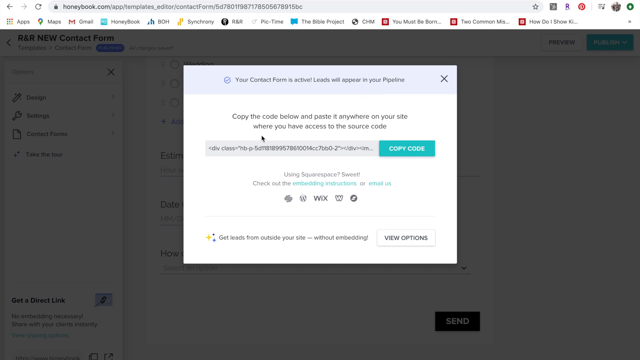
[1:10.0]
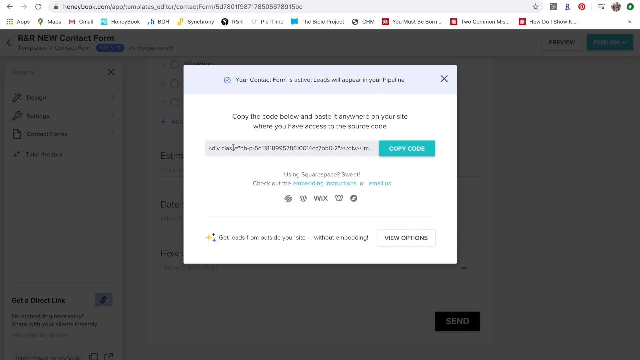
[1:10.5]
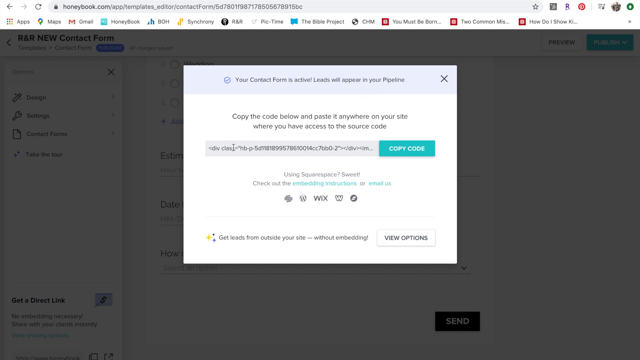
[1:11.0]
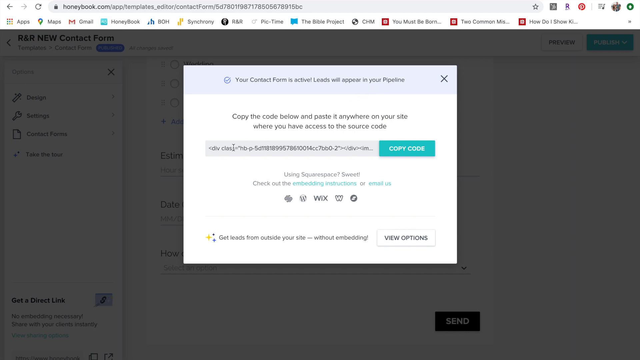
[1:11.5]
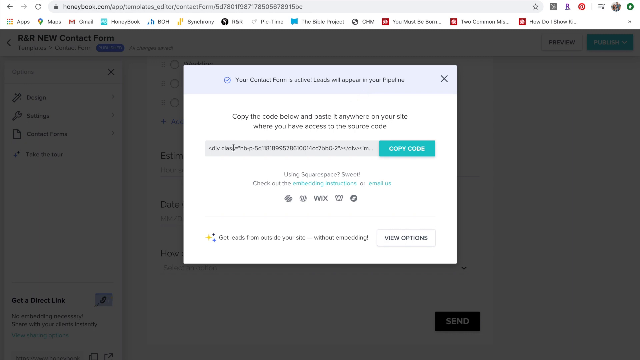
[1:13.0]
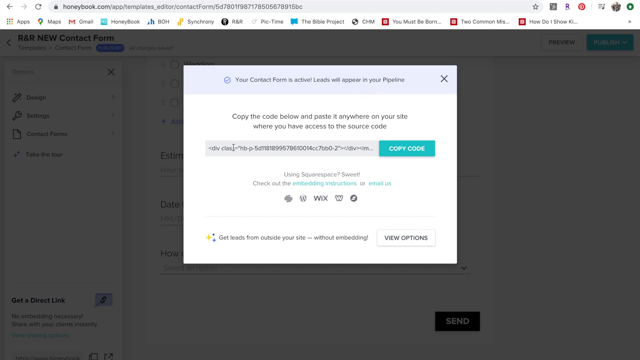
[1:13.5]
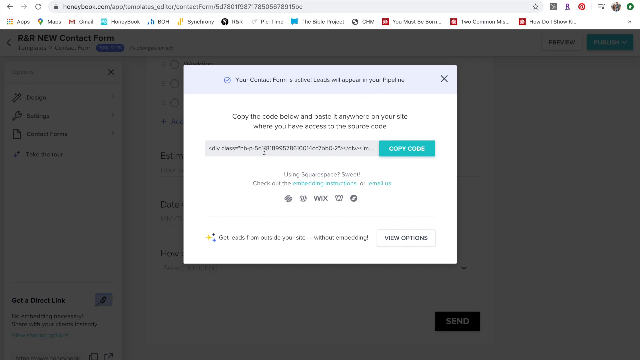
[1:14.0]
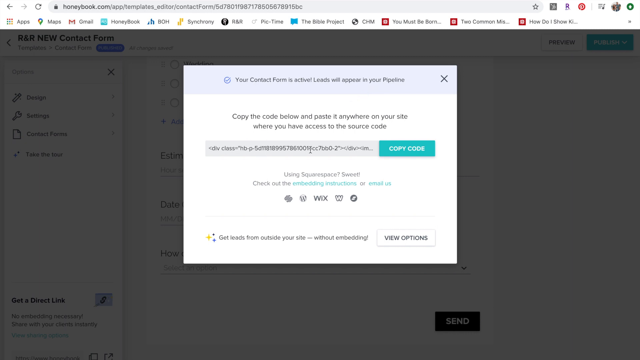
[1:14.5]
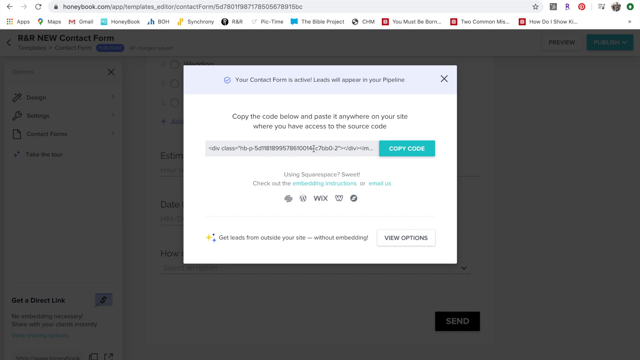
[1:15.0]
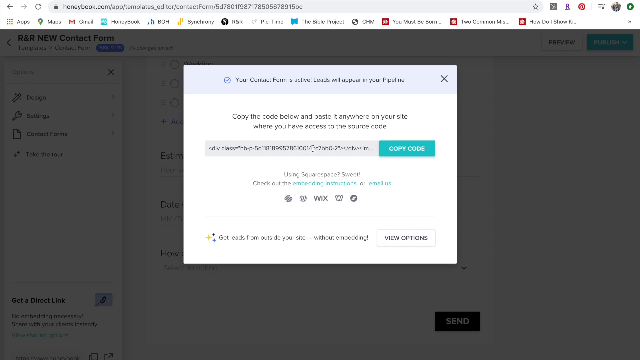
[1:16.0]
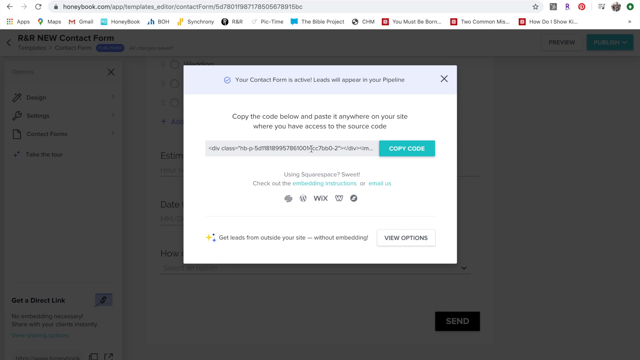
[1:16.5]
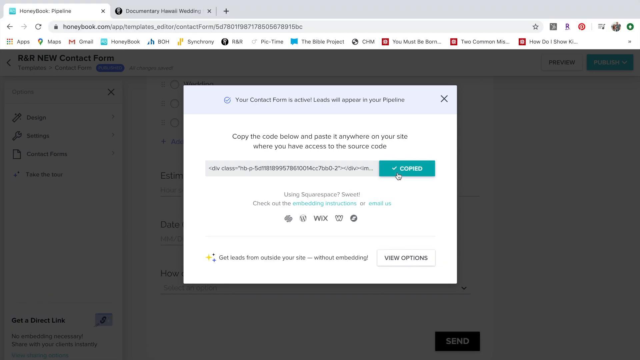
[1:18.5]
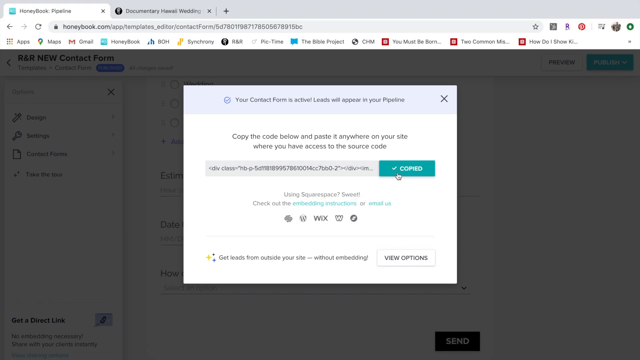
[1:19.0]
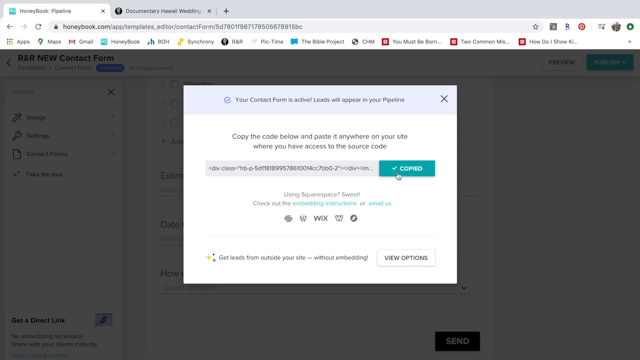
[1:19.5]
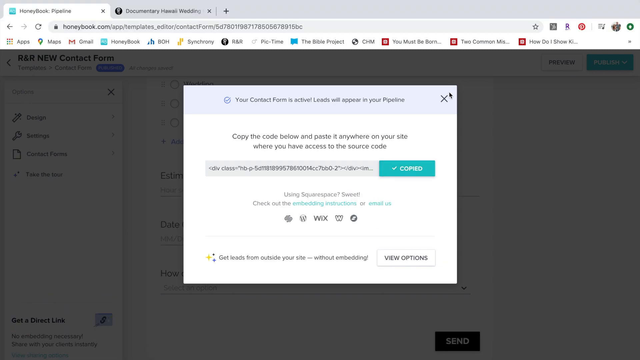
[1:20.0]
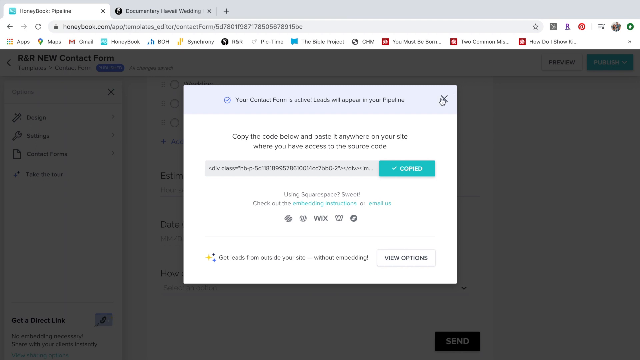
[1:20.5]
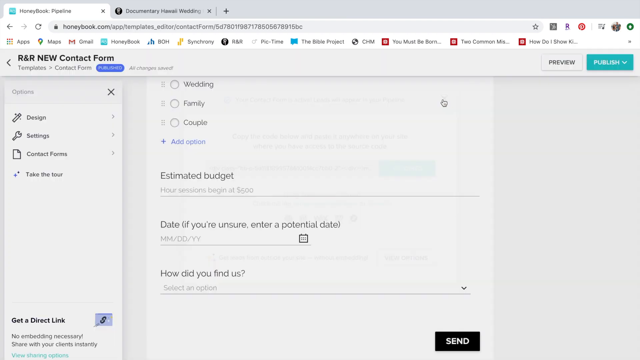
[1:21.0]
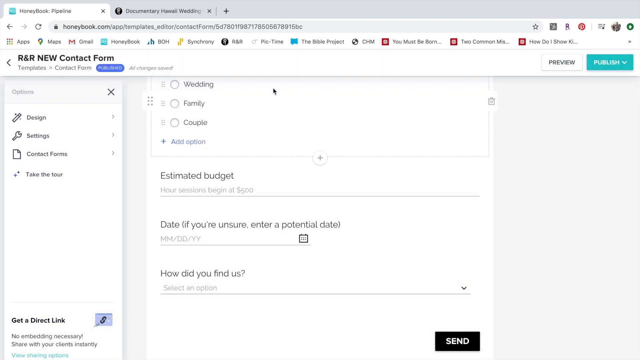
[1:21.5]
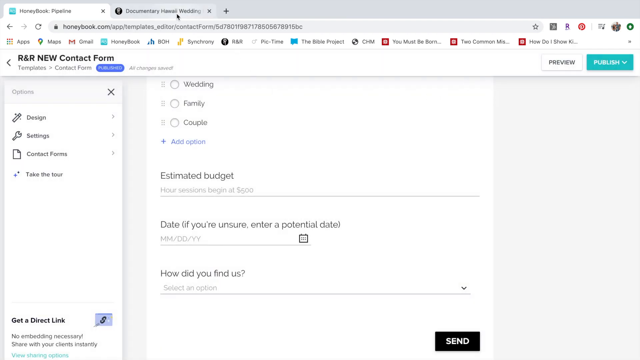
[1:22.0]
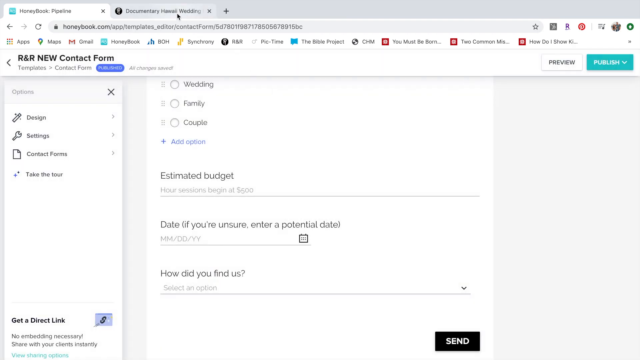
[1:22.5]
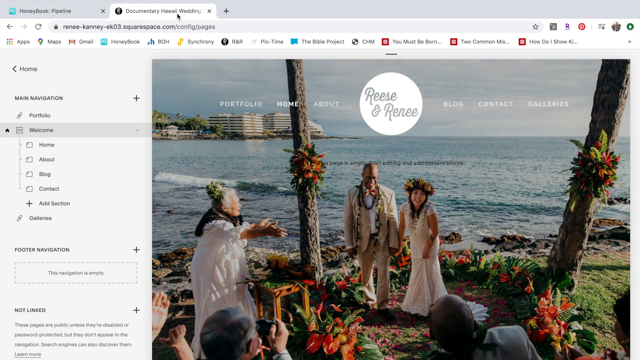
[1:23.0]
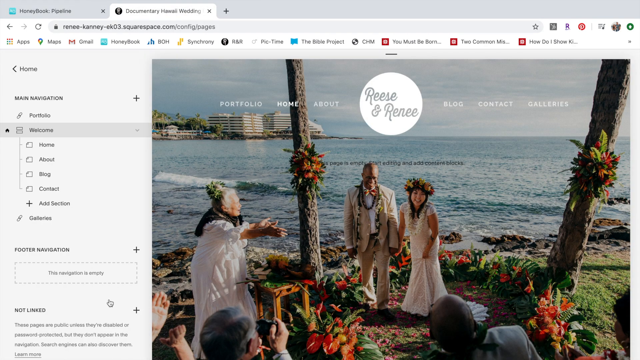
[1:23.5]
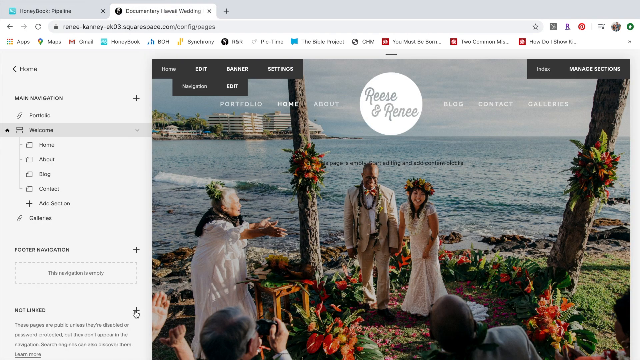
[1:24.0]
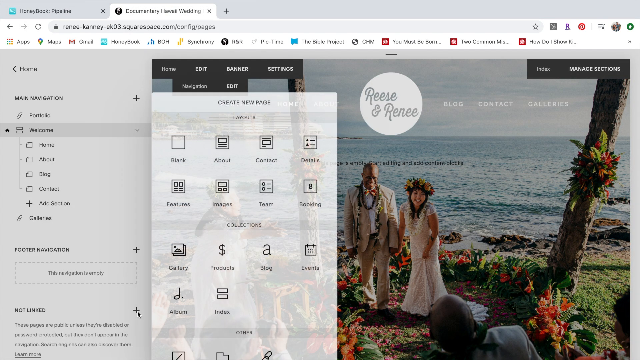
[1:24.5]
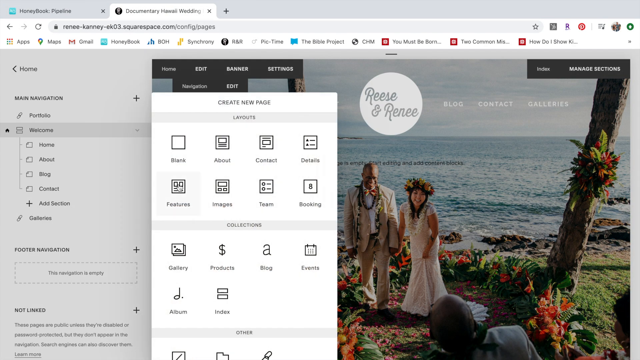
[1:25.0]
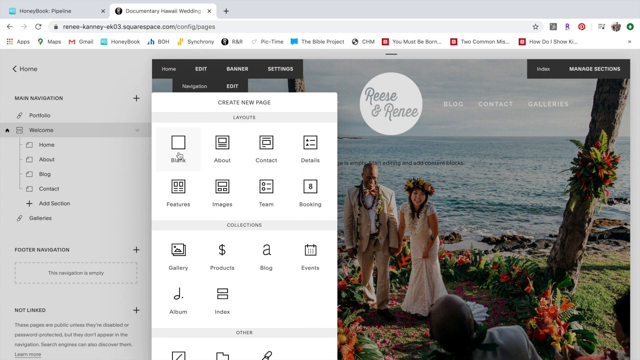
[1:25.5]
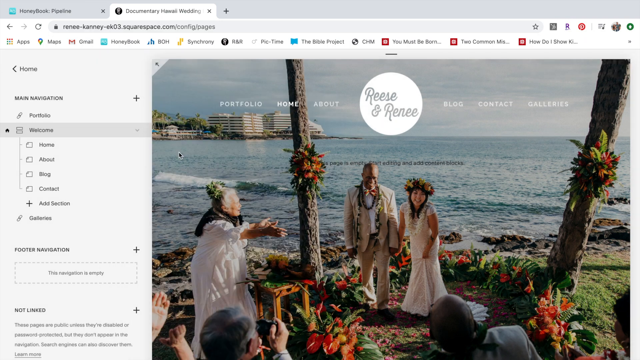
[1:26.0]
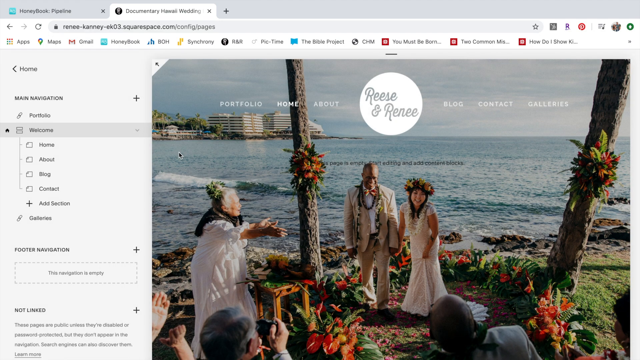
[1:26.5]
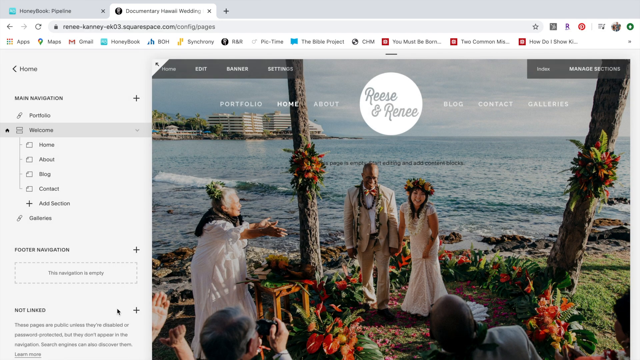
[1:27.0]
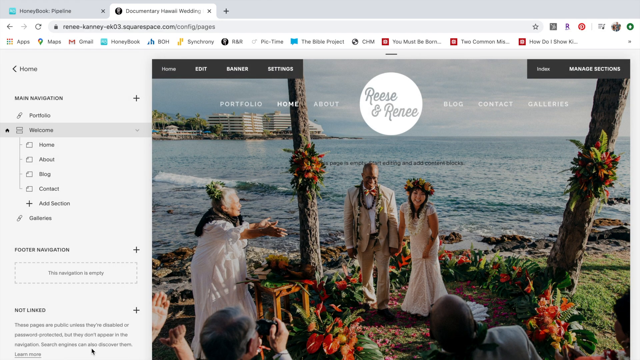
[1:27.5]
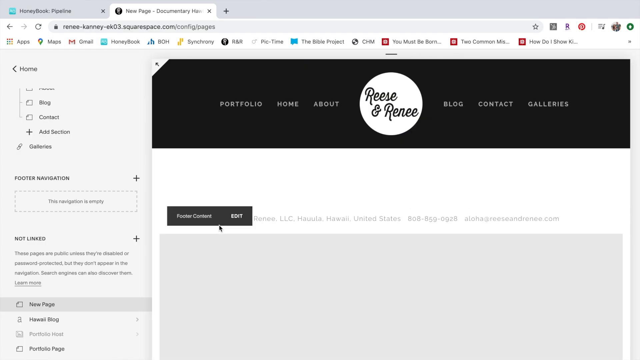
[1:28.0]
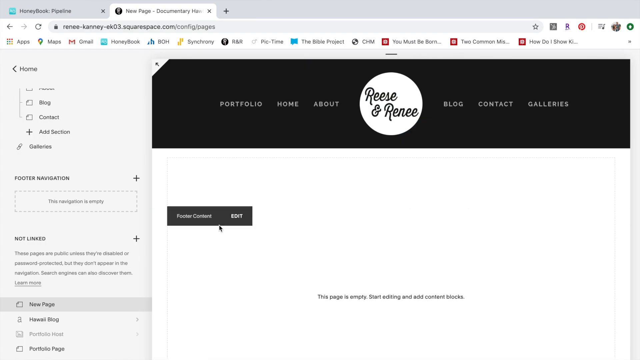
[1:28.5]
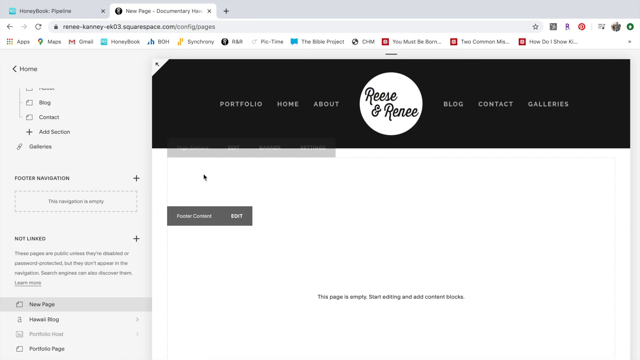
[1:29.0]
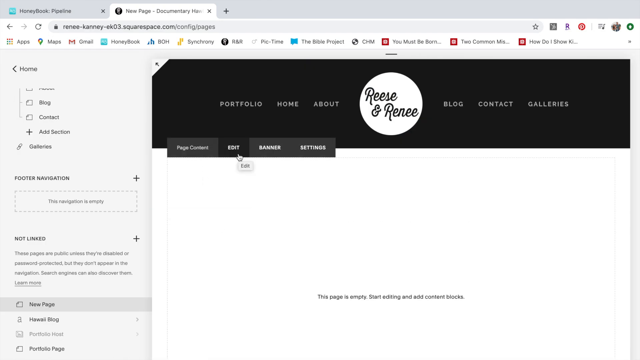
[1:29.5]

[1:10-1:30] A web browser shows honeybook.com with a page called R&R new contact form open. The background page is greyed out behind a pop-up overlay in the centre of the screen confirming that a contact form is active. The overlay also contains a code that can be copied and pasted anywhere on a site so the web page can link back to the contact form. The user hovers the cursor over the code, then clicks the copy button to the right, which changes to say copied with a small tick icon. They close the pop-up using the X in the top right-hand corner. The user then switches to a second browser tab showing a website for a wedding in edit mode, with an editing pane on the left-hand side. They navigate down this menu and select an X button under the not linked category, which brings up a menu on the left side. They select a blank layout to create a new page, and a new page loads on the website, empty apart from a header menu and a logo.